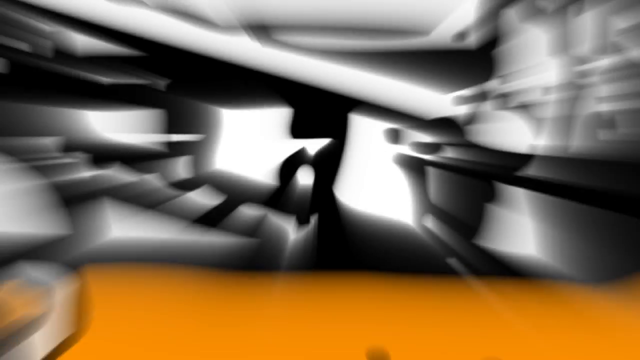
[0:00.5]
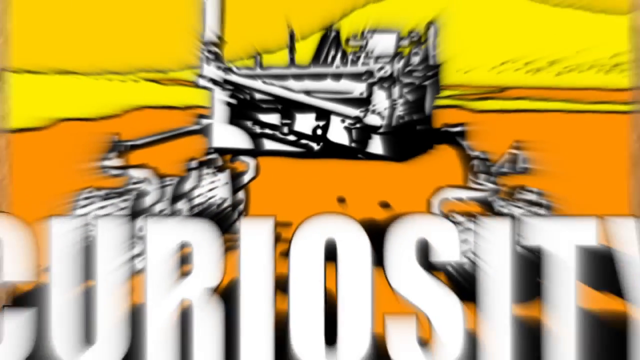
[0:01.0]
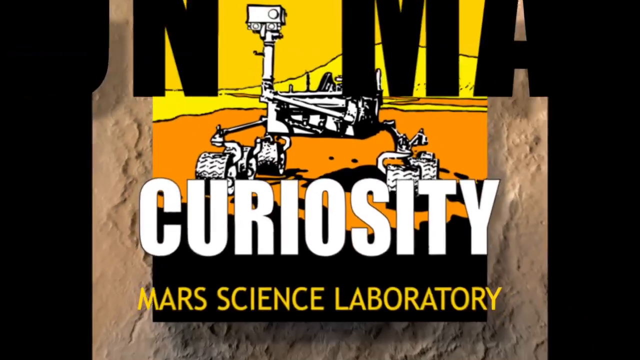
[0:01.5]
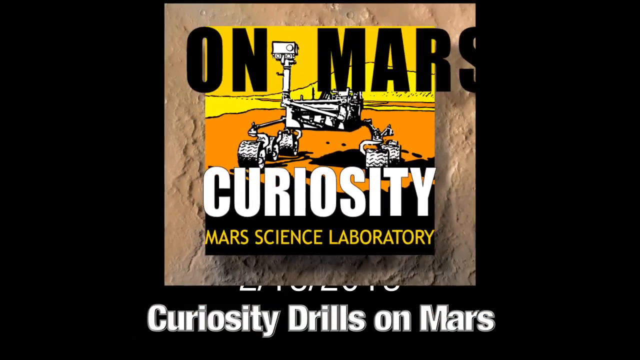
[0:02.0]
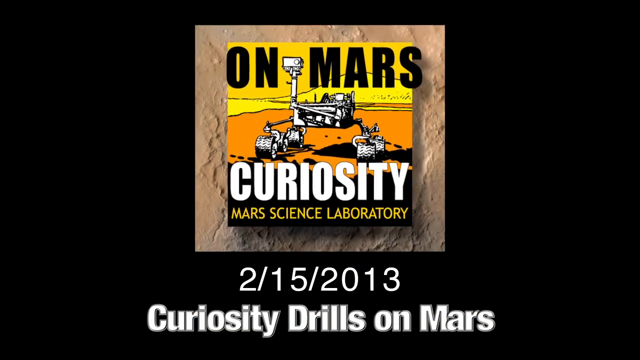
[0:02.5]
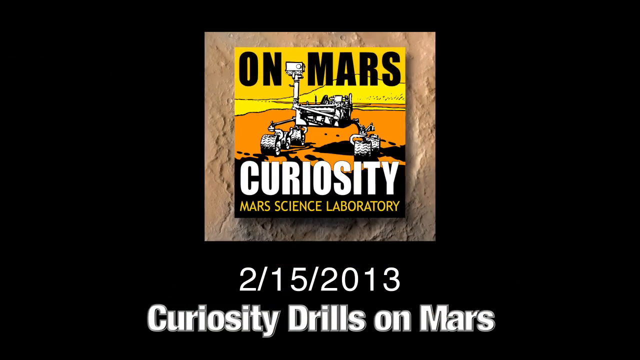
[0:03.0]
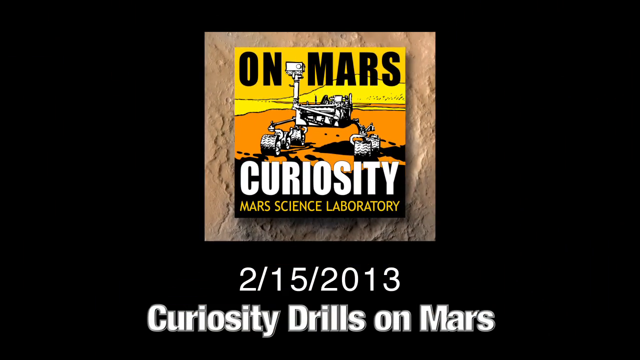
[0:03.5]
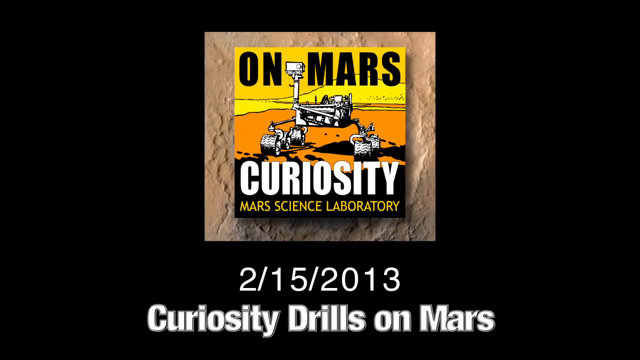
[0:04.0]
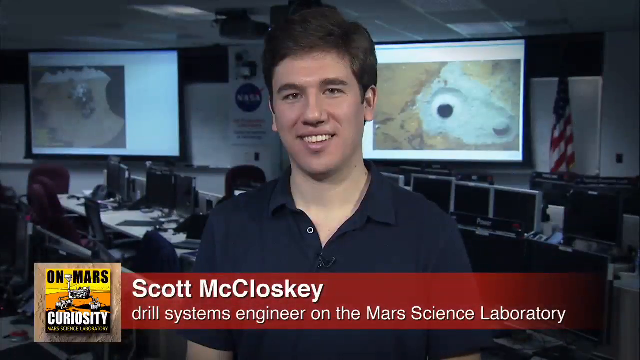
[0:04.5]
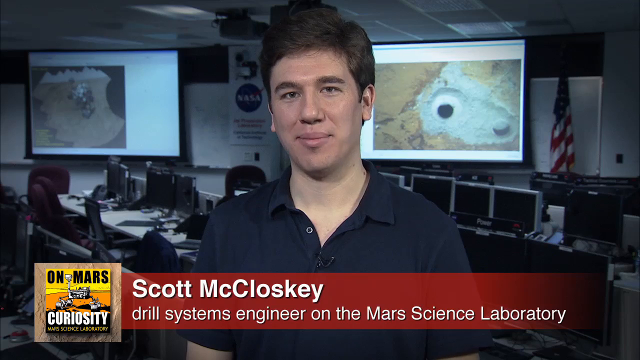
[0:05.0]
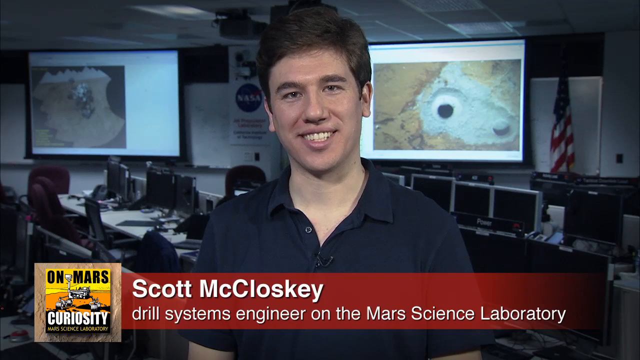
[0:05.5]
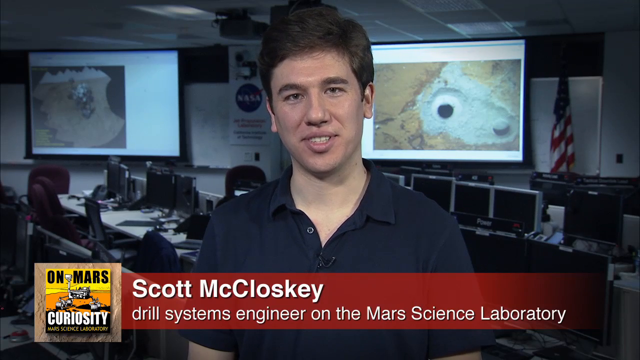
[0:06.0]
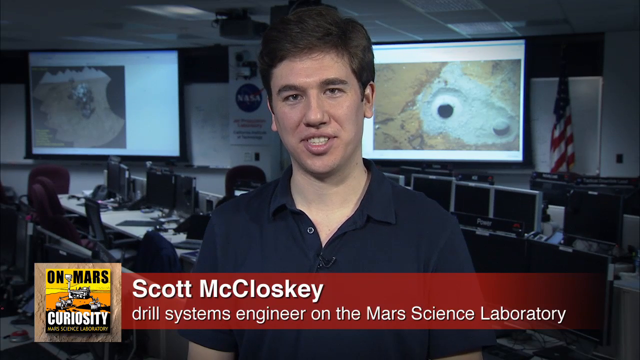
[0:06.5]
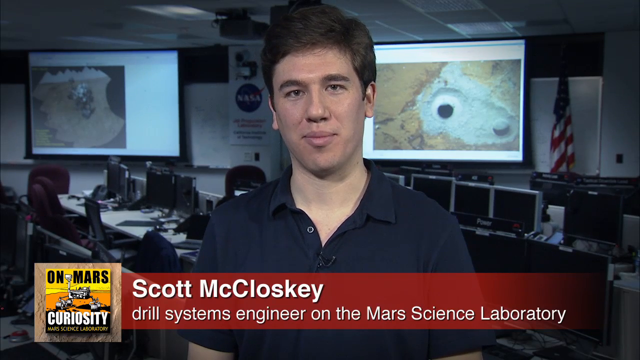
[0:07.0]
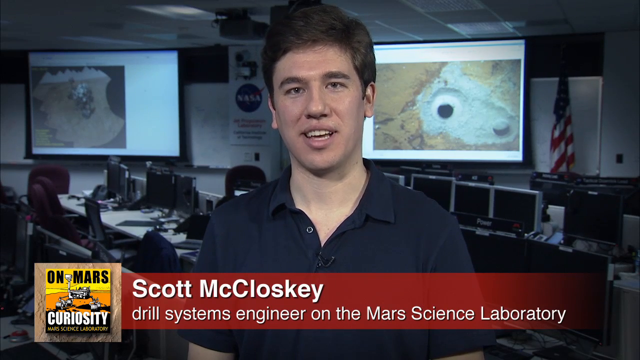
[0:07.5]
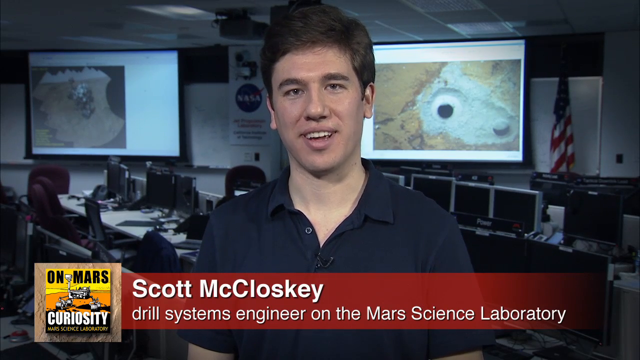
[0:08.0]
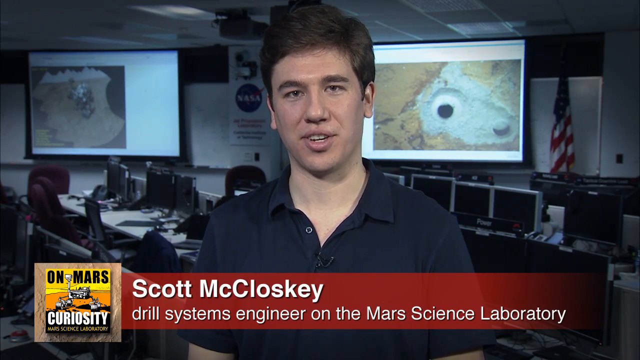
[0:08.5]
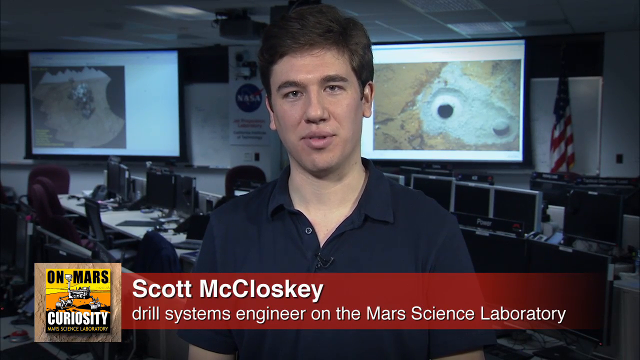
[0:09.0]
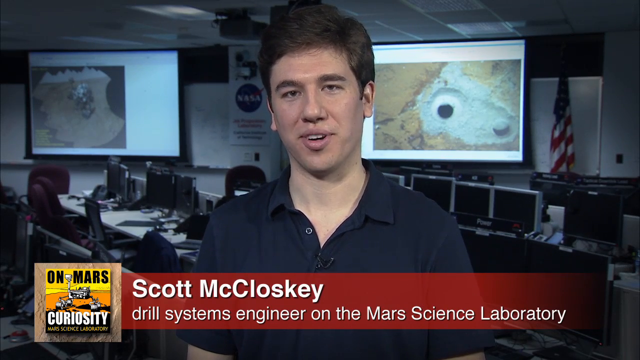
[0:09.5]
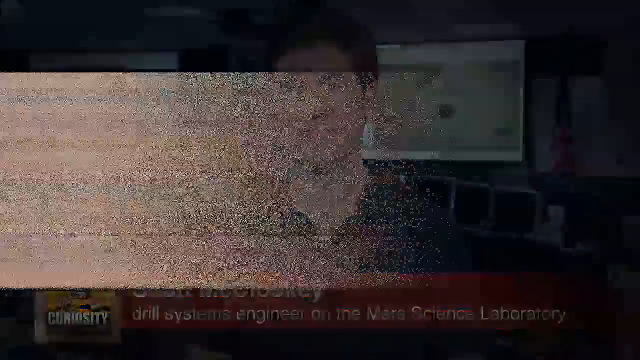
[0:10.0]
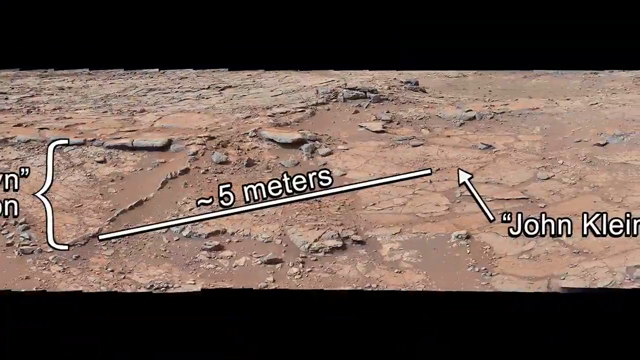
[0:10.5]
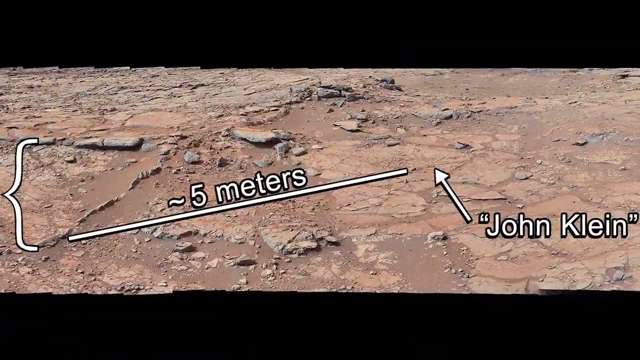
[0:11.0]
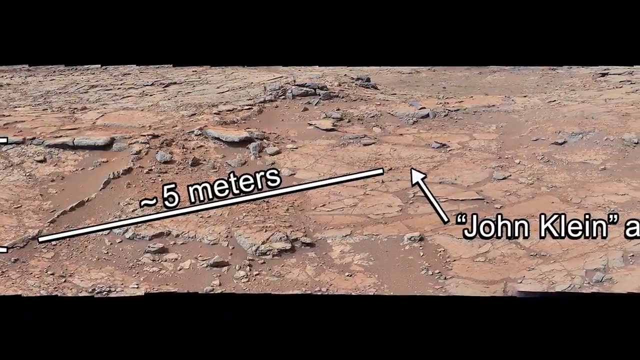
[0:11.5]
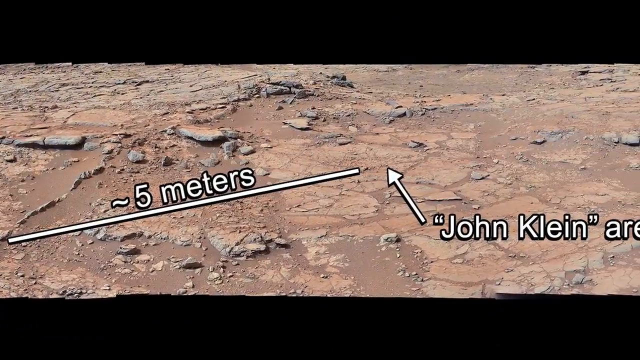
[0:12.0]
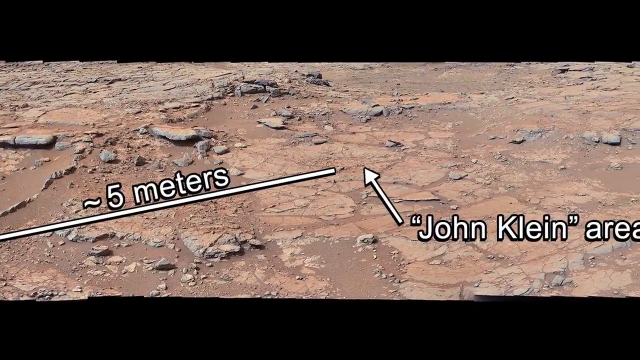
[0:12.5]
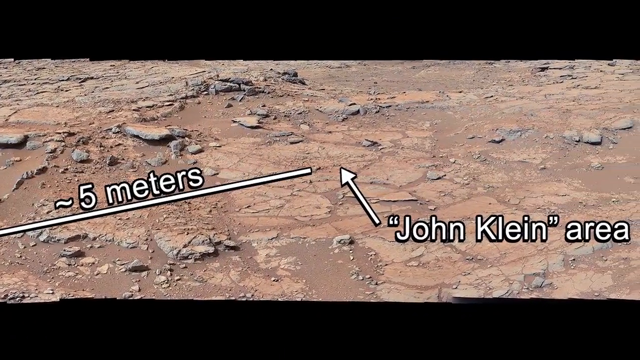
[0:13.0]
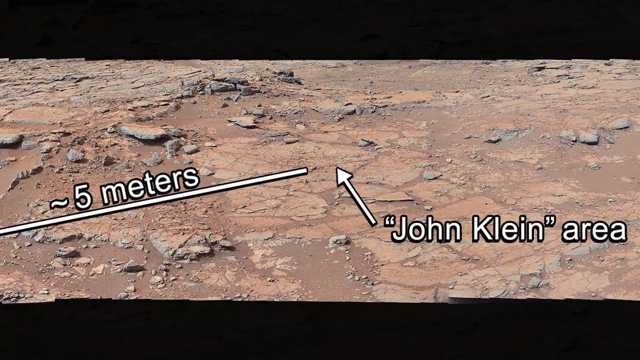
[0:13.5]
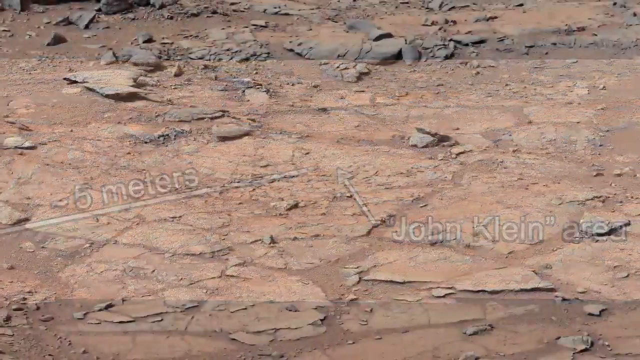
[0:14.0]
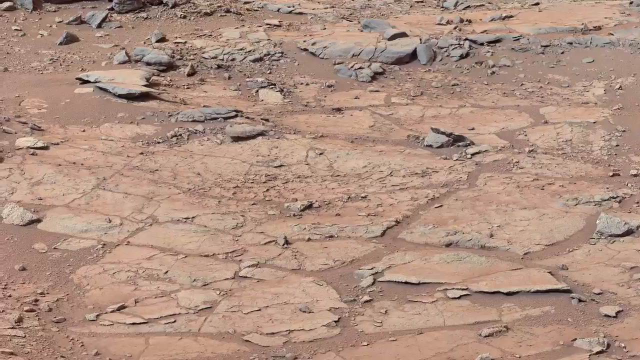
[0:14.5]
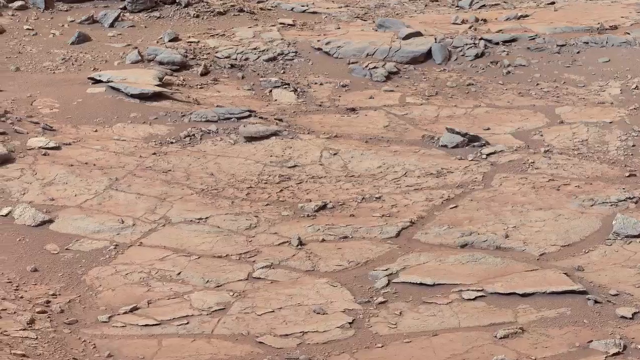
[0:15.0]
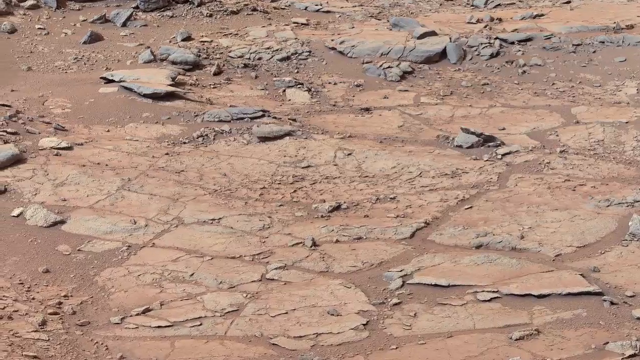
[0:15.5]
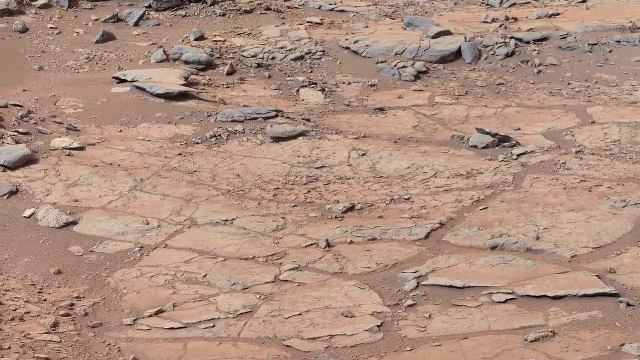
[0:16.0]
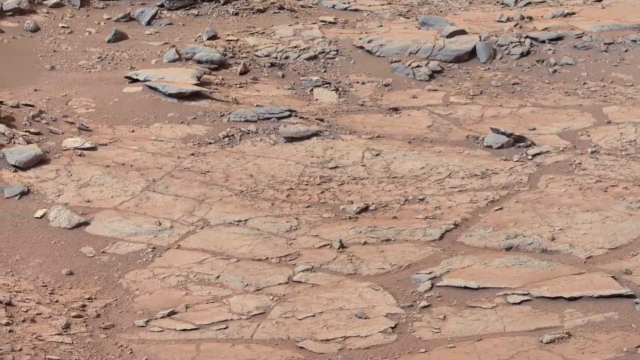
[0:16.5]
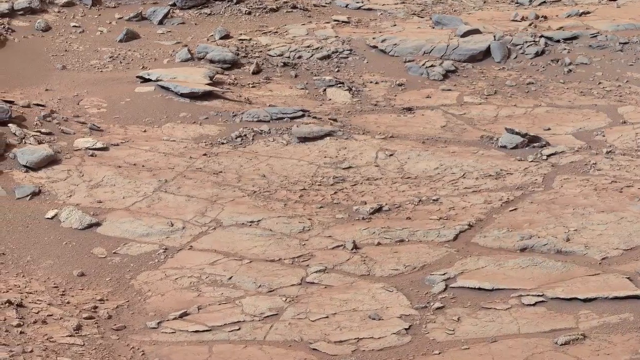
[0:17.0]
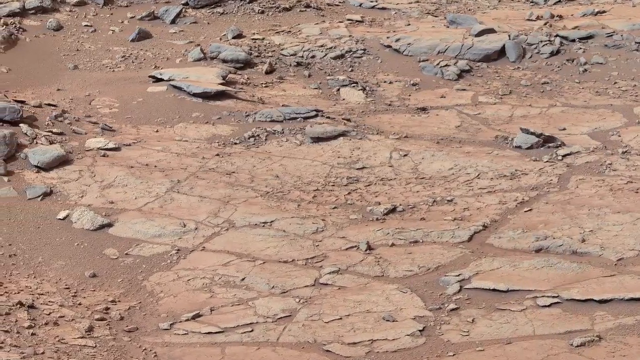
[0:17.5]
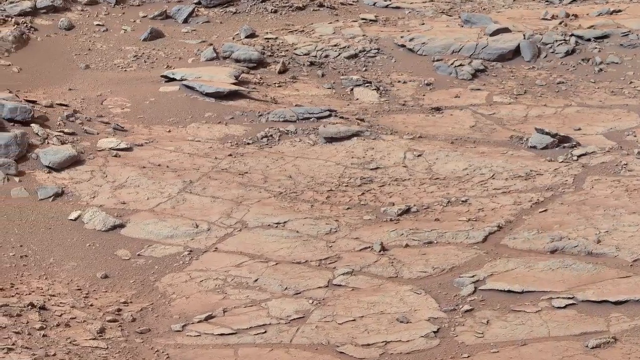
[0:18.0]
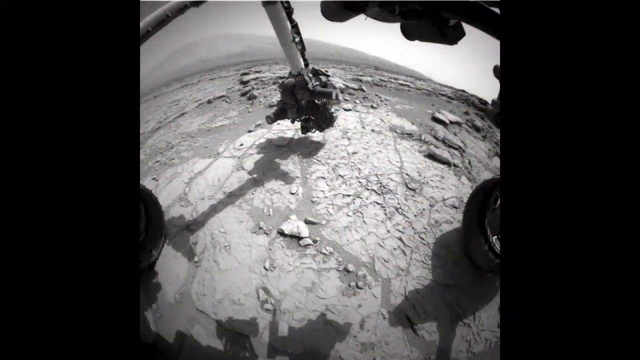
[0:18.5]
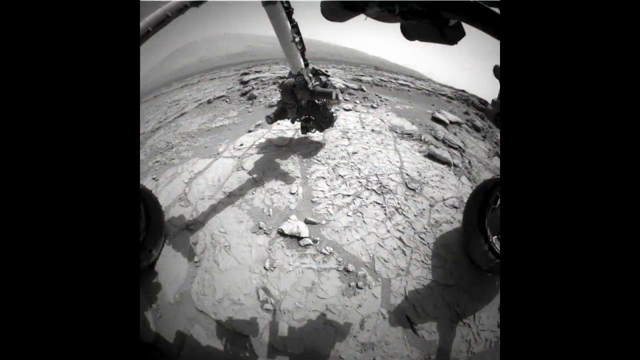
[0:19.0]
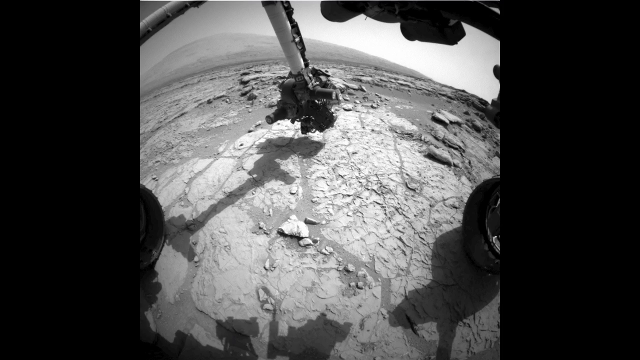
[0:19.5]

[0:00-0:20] The video opens with a title screen for the Curiosity rover report, dated February 15, 2013, with a small logo of a planetary rover. It reads "On Mars Curiosity, Mars Science Laboratory." The next screen reads "2-15-2013" and "Curiosity drills on Mars." The reporter, Scott McCloskey, drill systems engineer on the Mars Science Laboratory, then appears on screen, speaking; he looks to be in a laboratory-type setting with a bunch of computers. The video cuts to footage of the surface of Mars, with what may be a trajectory of where the rover has explored and some measurements drawn on the screen.